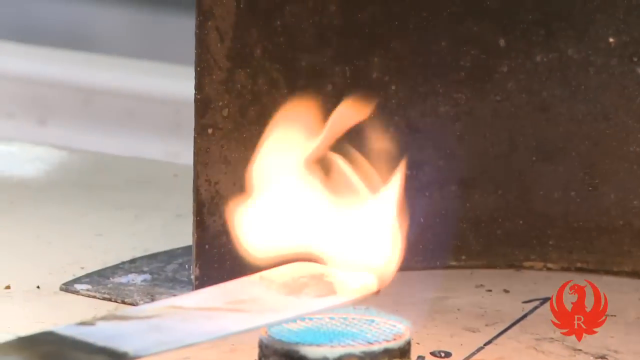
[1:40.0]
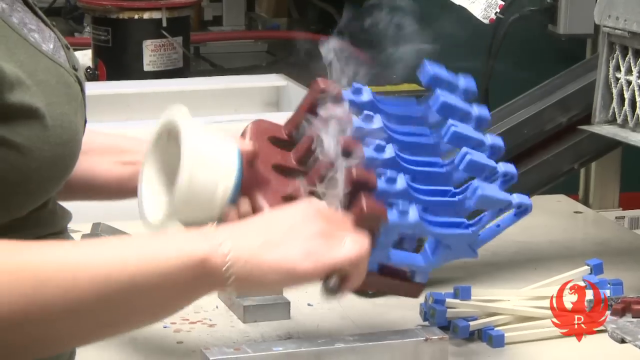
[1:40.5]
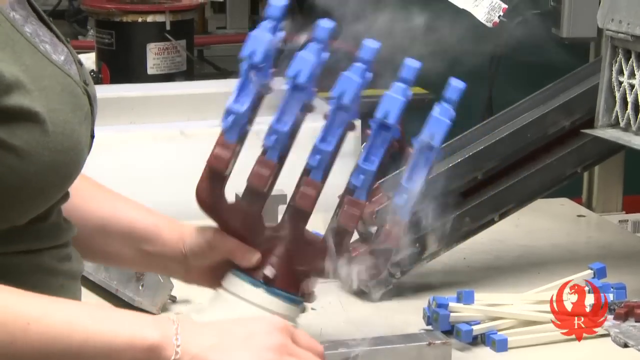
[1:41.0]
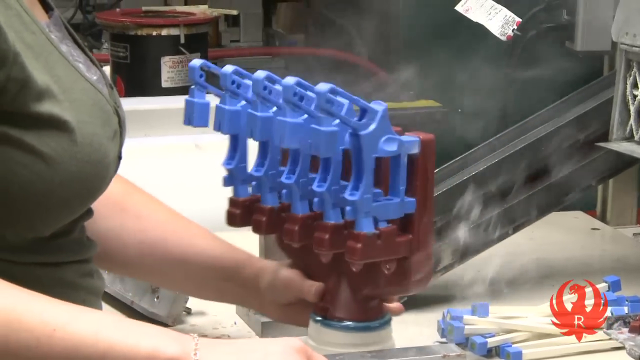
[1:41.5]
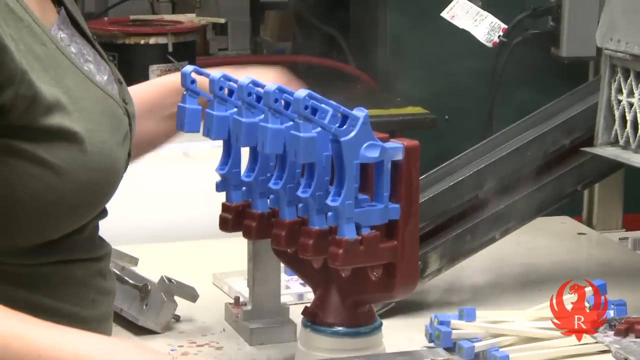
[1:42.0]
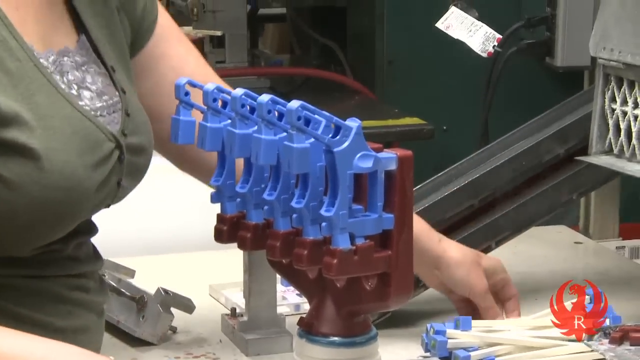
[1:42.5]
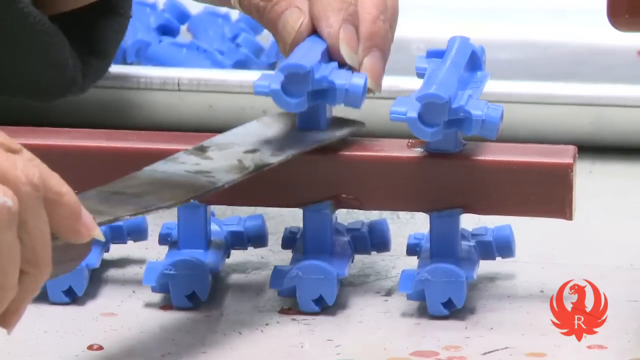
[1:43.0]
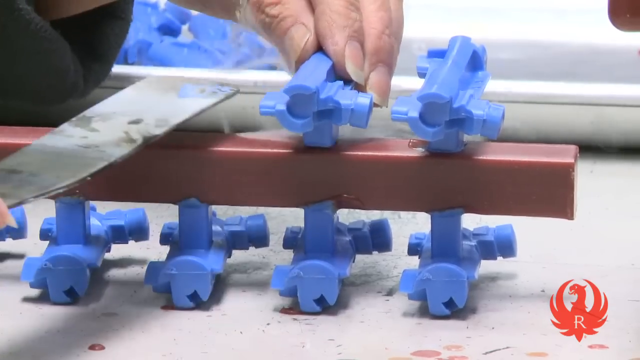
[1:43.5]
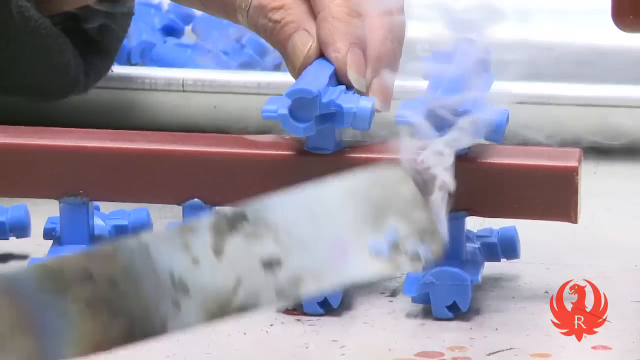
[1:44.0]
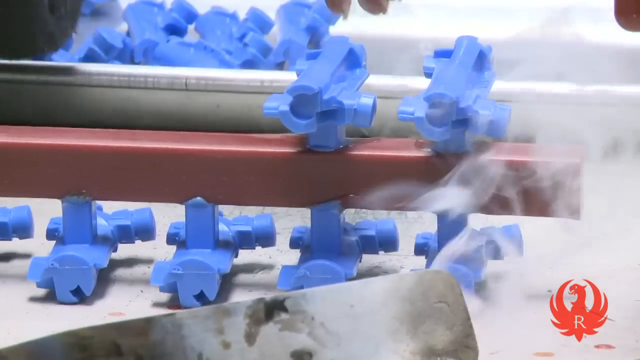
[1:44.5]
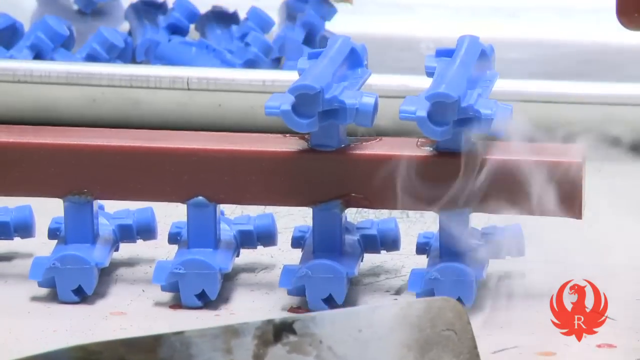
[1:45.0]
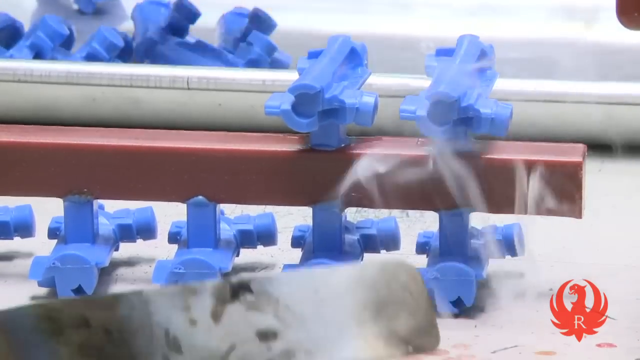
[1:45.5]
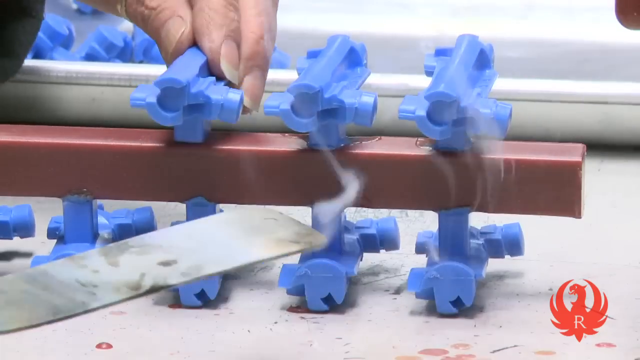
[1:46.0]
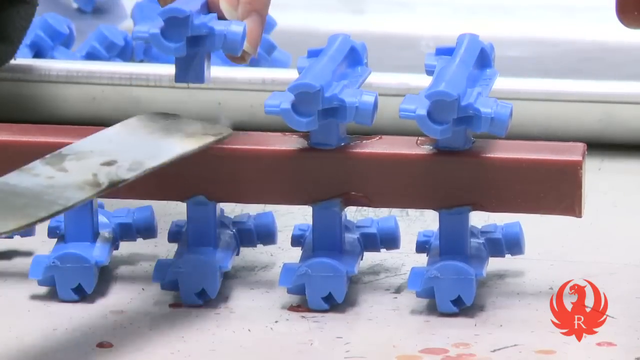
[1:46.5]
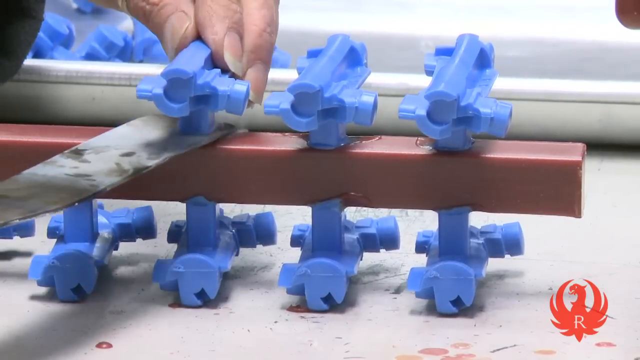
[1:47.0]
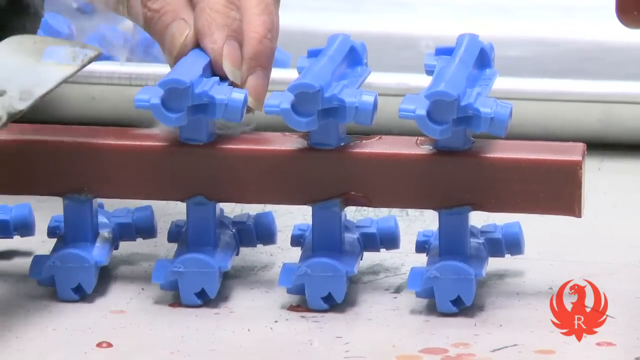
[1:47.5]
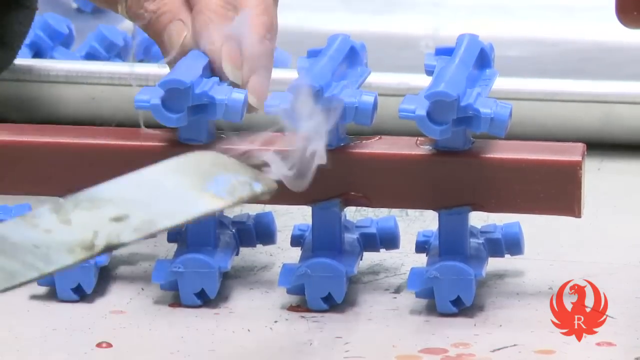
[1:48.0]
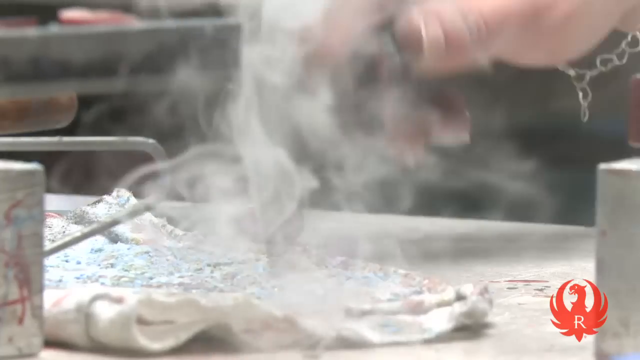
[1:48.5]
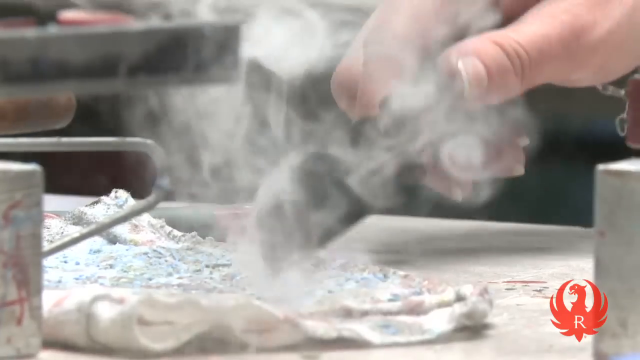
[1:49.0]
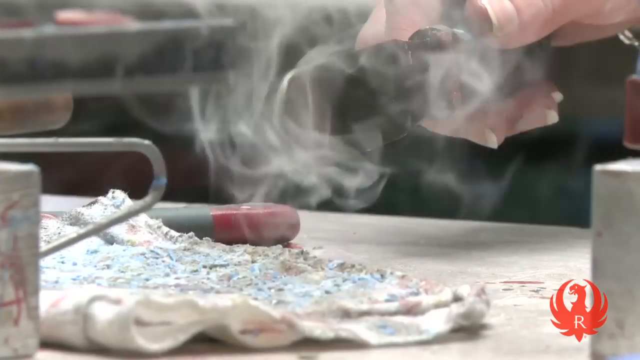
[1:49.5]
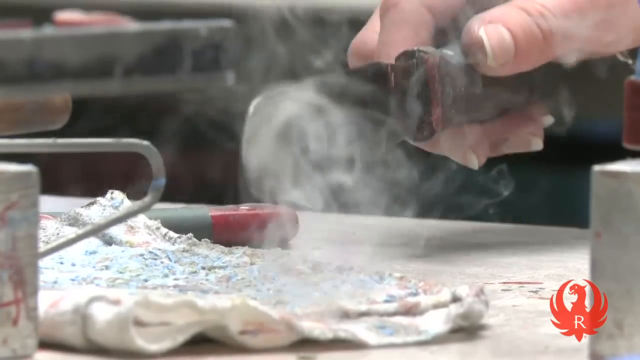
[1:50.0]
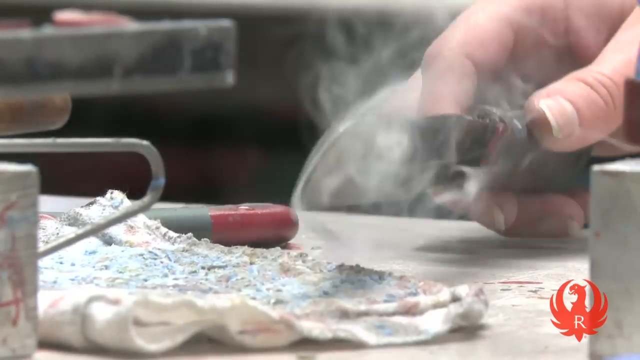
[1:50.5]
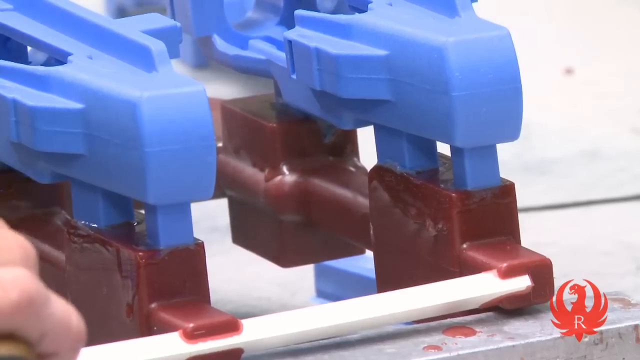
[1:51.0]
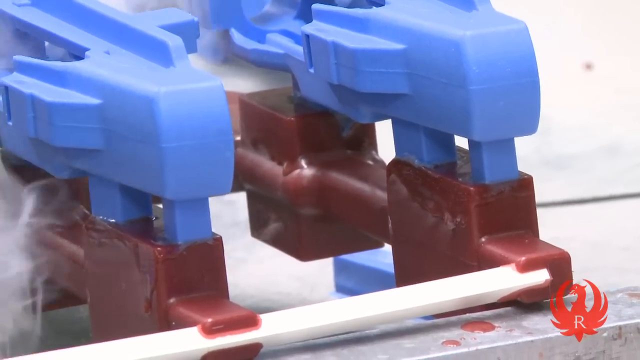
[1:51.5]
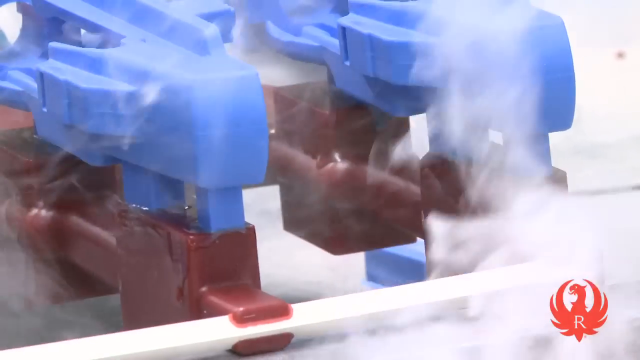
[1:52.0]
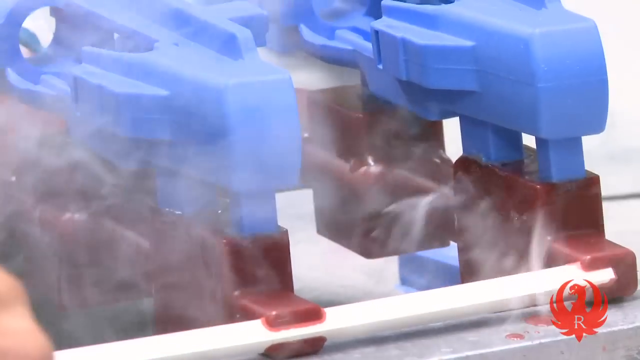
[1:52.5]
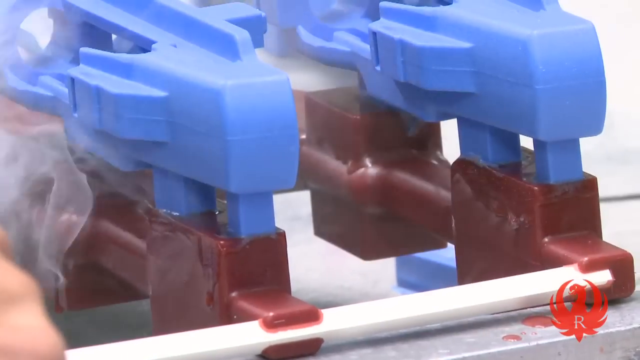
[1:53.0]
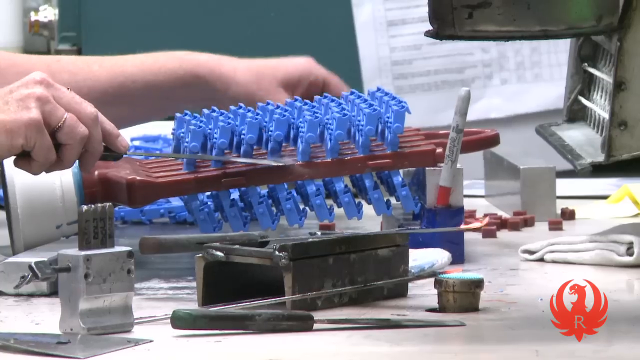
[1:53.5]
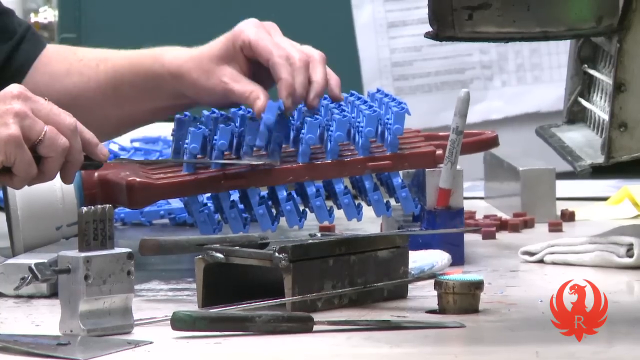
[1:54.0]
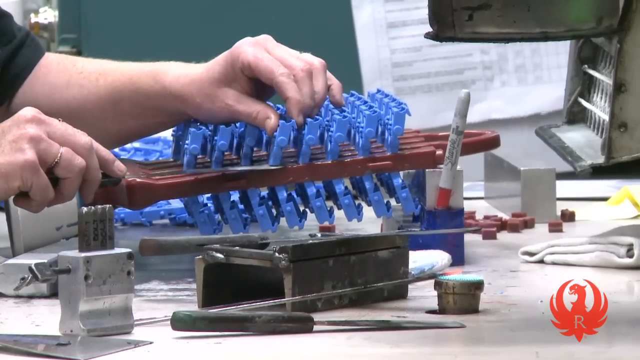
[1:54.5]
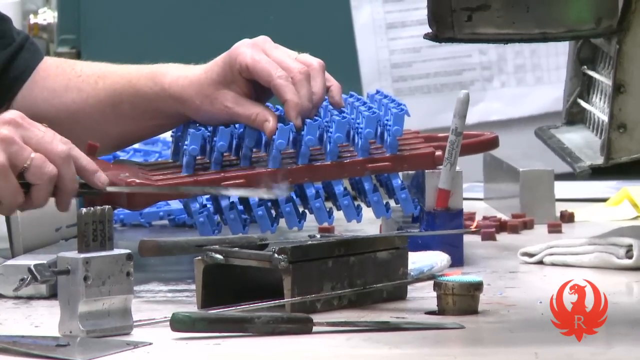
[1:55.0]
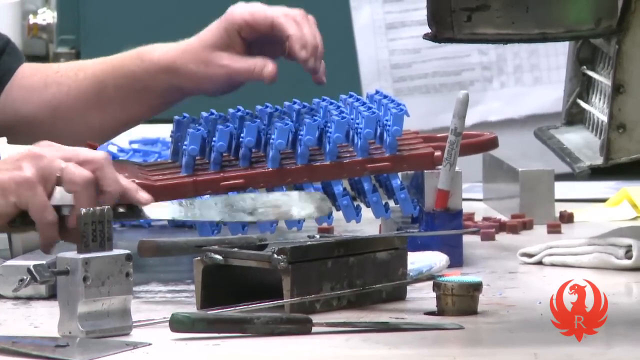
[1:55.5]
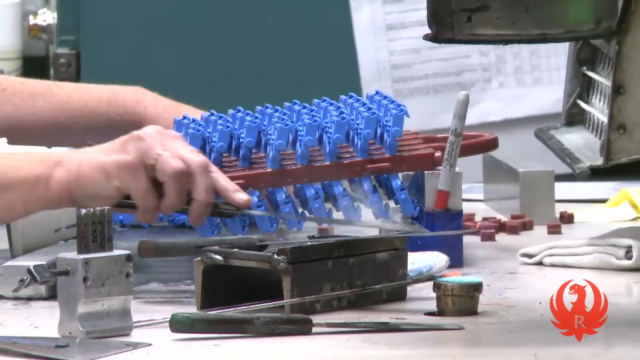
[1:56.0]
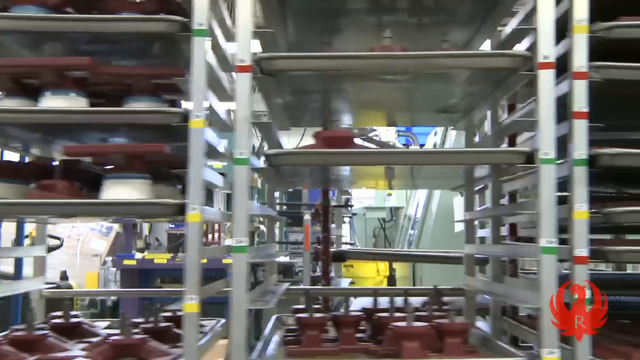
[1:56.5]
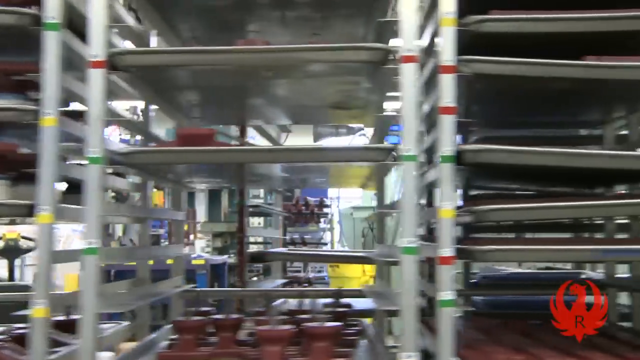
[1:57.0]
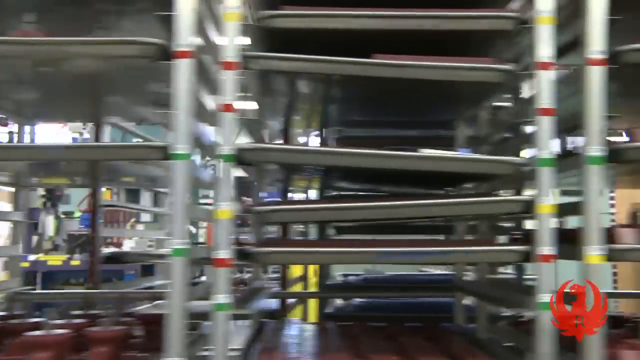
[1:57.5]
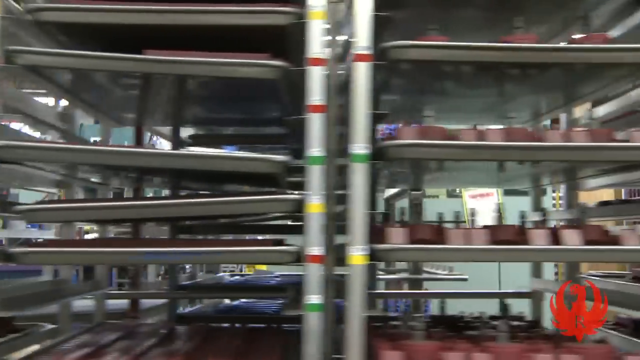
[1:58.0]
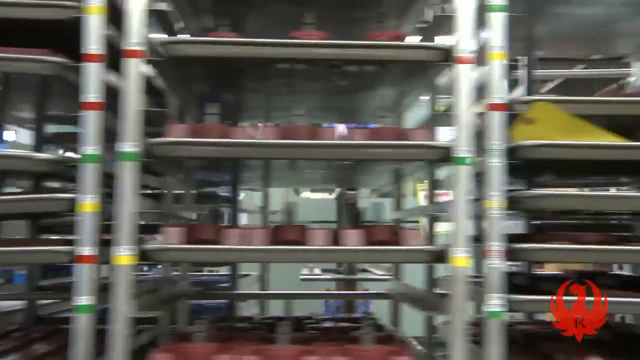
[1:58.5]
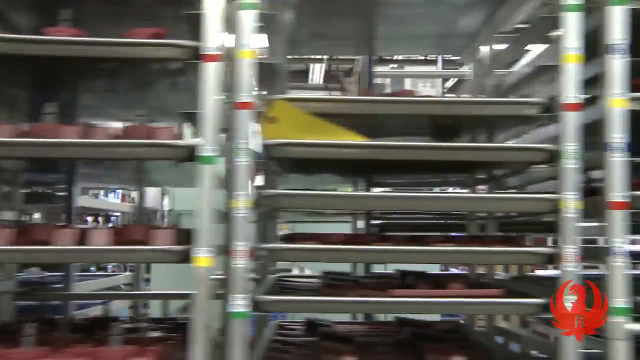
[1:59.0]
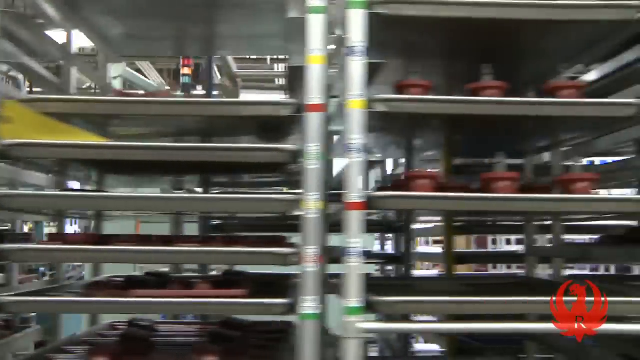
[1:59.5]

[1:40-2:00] As part of the Ruger how it's made wax mold video, workers put wax molds onto a holder of some sort and onto trays, apparently to cool down. They fuse the wax molds to a long pole and slice them with something like a heated knife. The wax molds look like molds for a gun barrel. Trays almost like bakery trays are full of these wax molds.